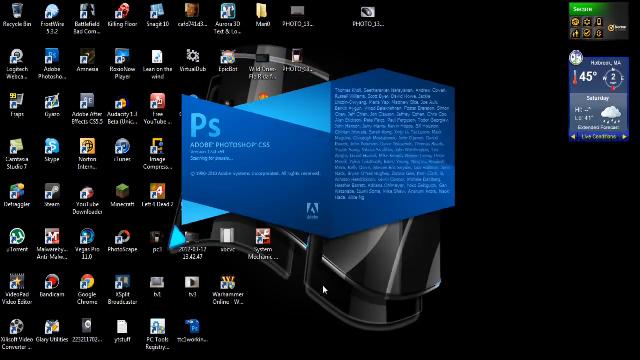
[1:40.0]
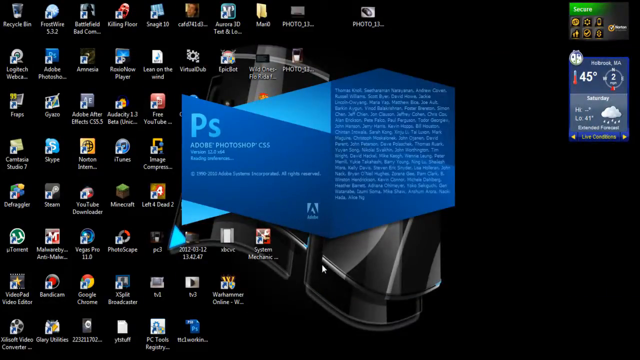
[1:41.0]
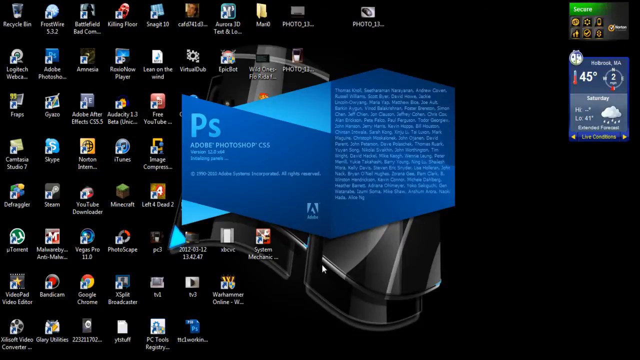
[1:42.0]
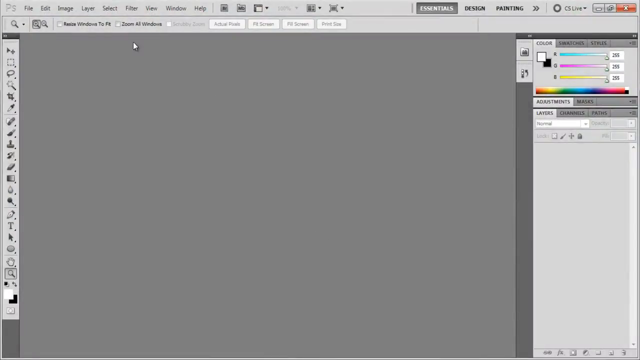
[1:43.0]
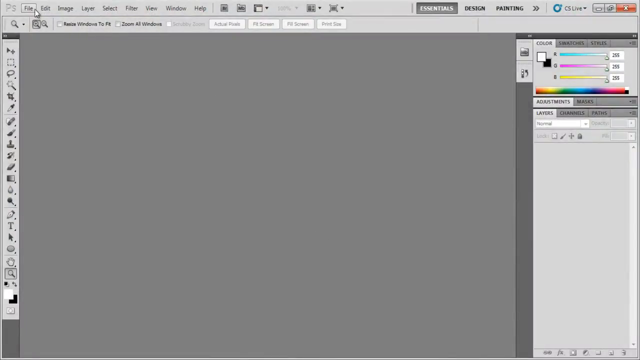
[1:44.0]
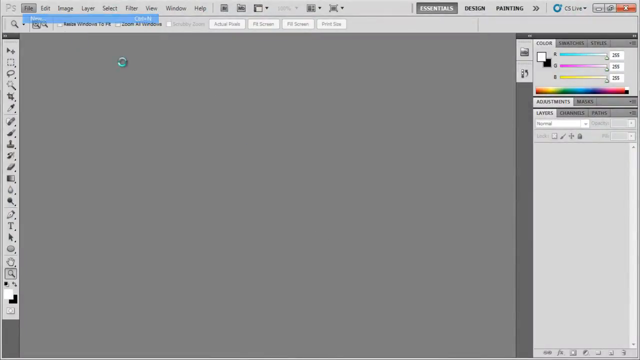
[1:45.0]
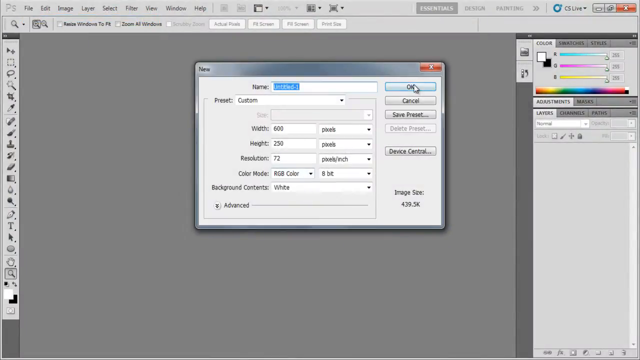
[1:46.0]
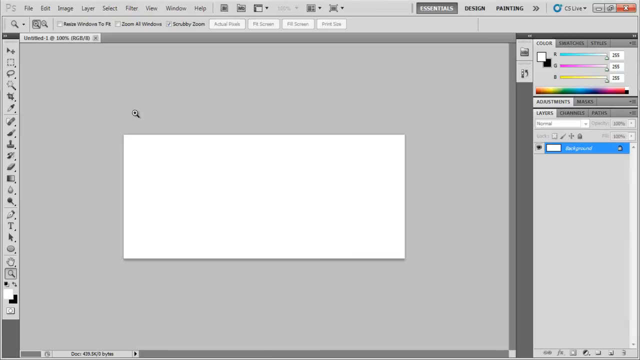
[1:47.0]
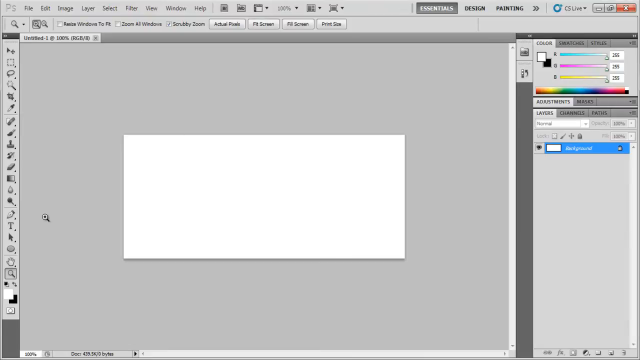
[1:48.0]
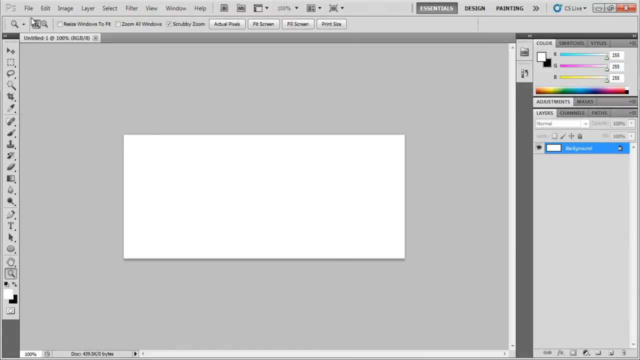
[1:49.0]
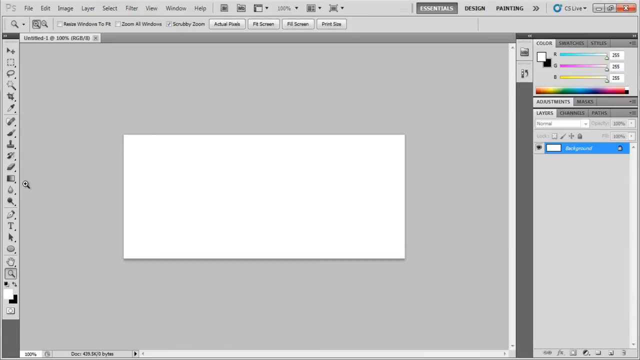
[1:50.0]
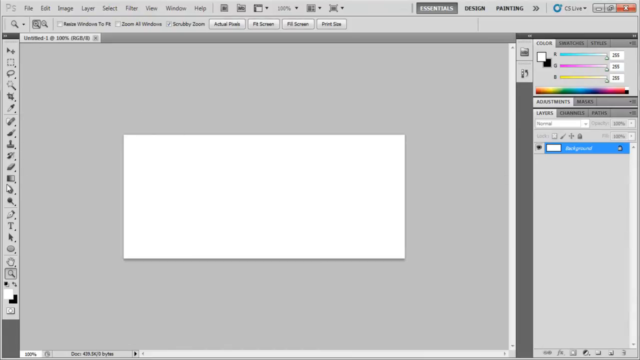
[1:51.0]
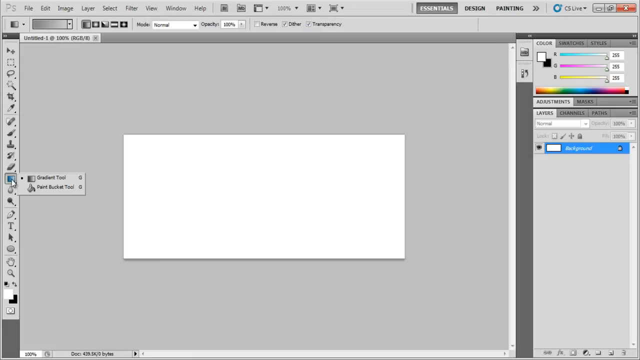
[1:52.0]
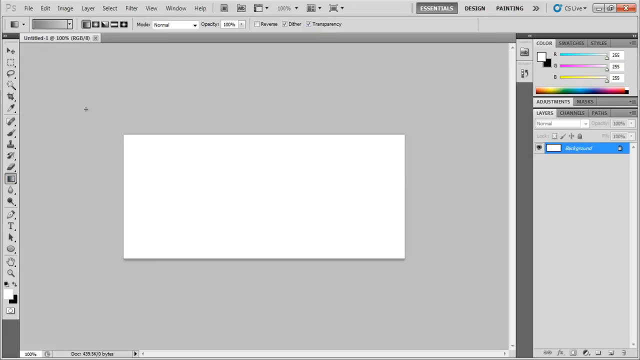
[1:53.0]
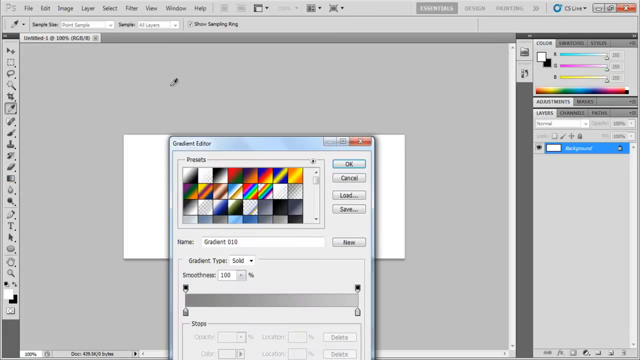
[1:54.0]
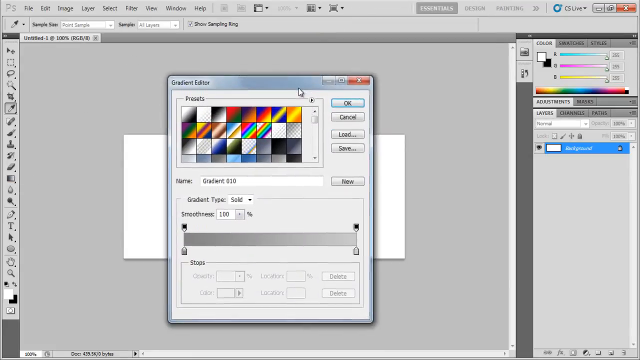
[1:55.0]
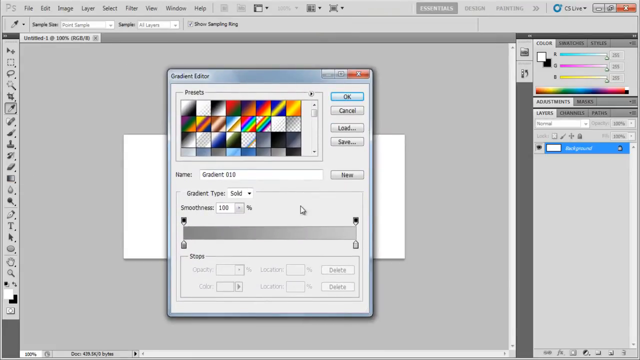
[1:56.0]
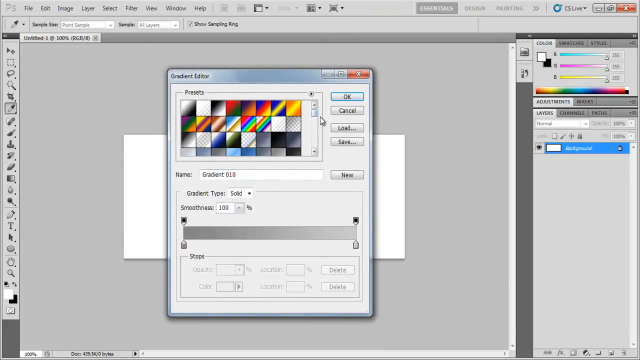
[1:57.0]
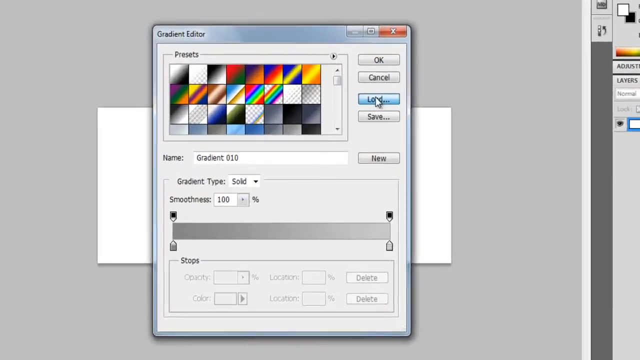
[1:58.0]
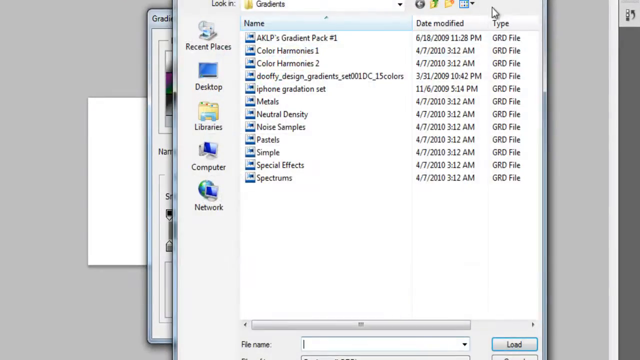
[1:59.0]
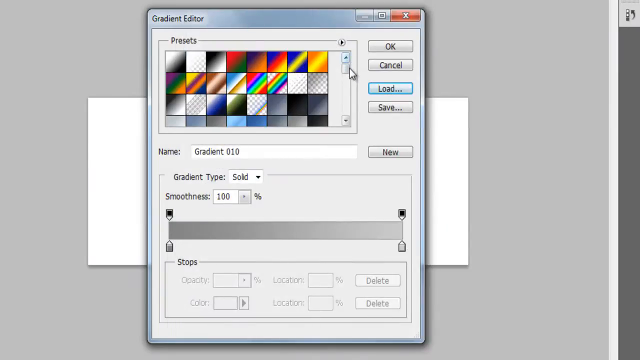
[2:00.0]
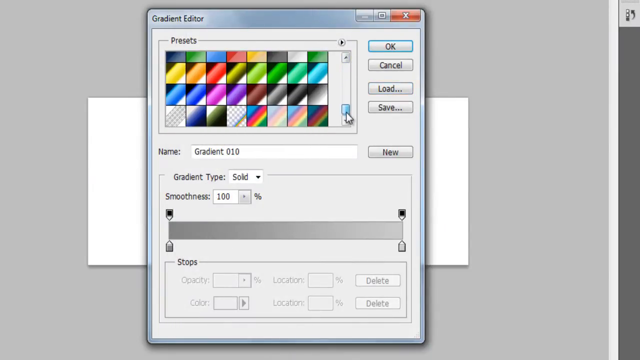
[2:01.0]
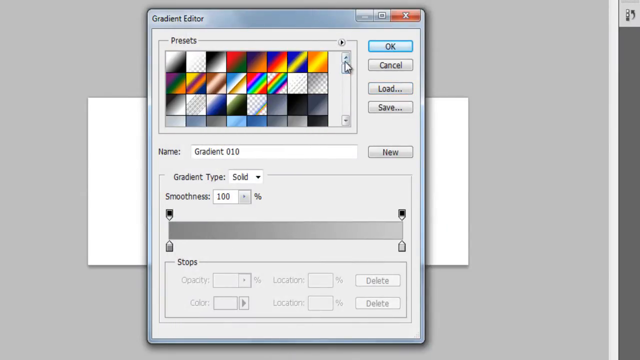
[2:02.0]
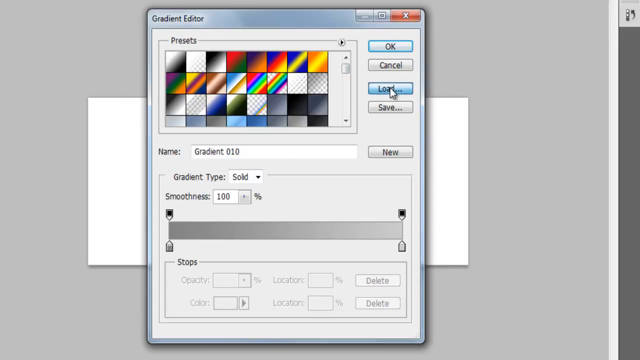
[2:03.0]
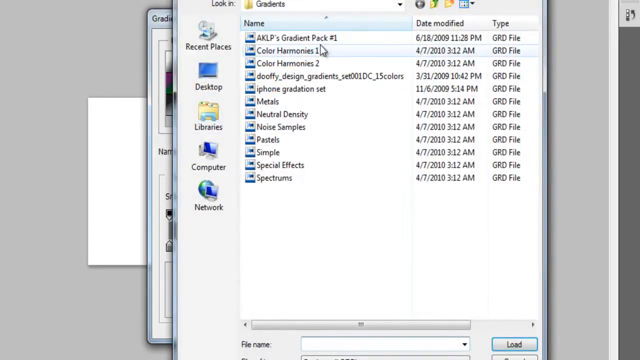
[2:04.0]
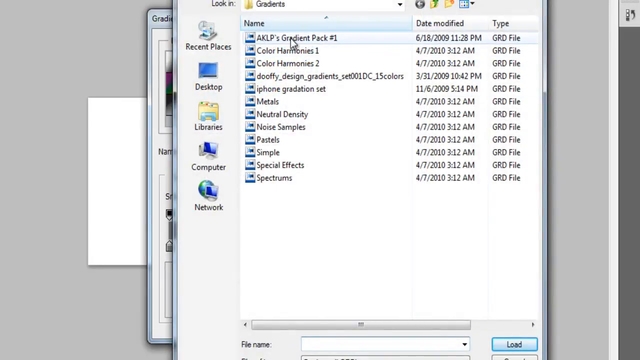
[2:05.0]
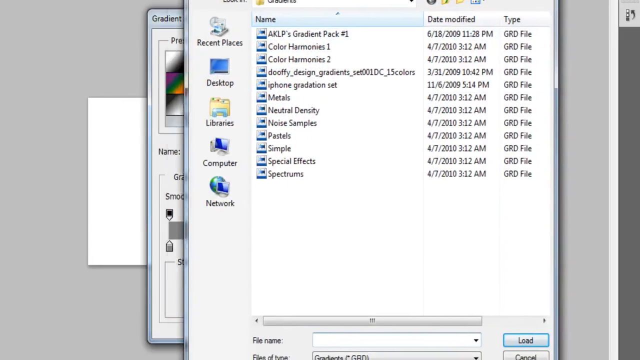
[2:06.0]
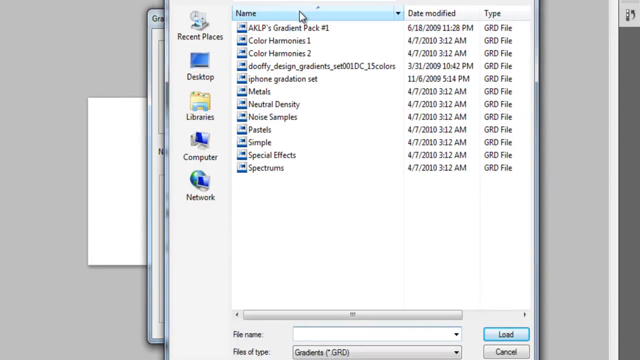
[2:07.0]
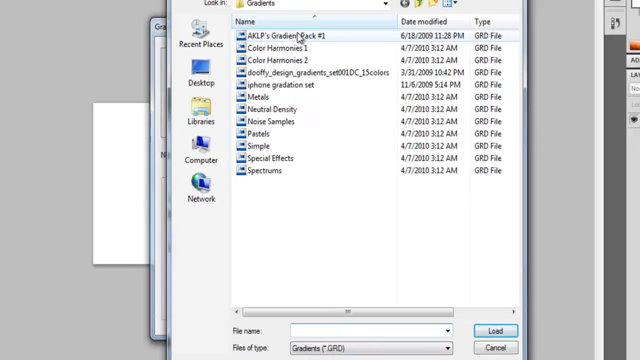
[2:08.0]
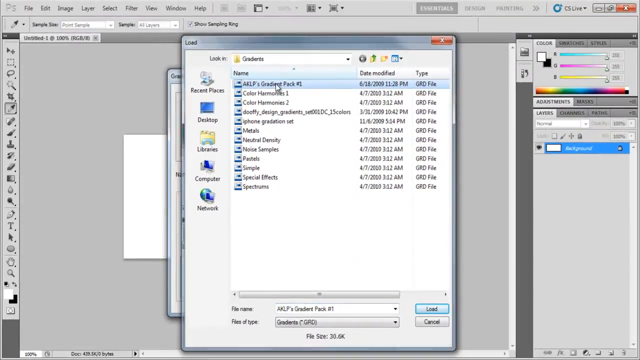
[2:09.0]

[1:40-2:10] The Photoshop app is opened and opens right away. The mouse clicks on the File tab in the gray app, then clicks on the list of gradients, and a window called gradient edit appears. The mouse seems to scroll down through the grid of gradients. A new File Explorer window is then opened to select a specific gradient that was downloaded from the website, saved into the gradients folder and moved under the Adobe Photoshop gradient presets; it is named AKLP gradient. The gradient pack is added from its new location. The Adobe Photoshop home page is white and gray, and the Gradient Editor allows for the addition of new gradients.